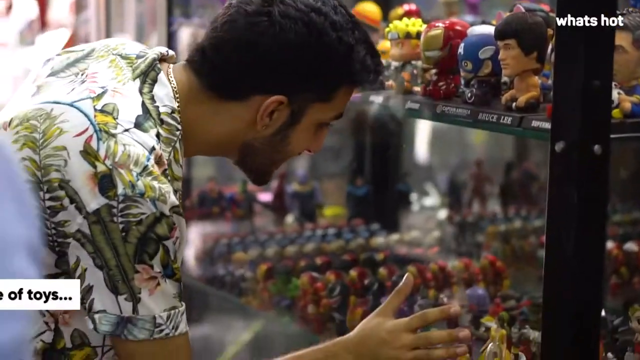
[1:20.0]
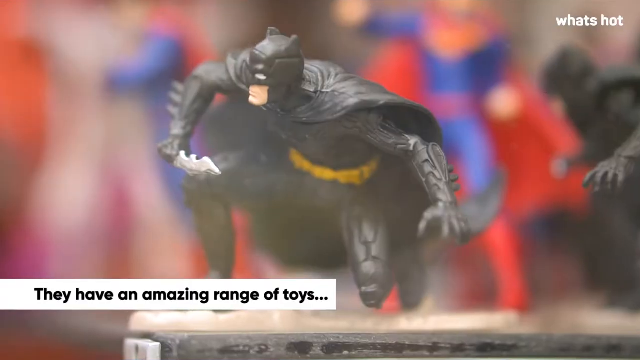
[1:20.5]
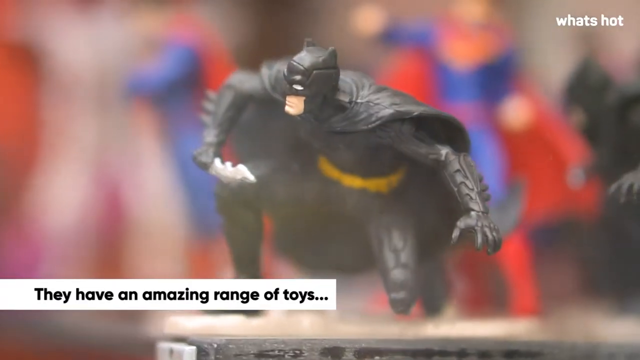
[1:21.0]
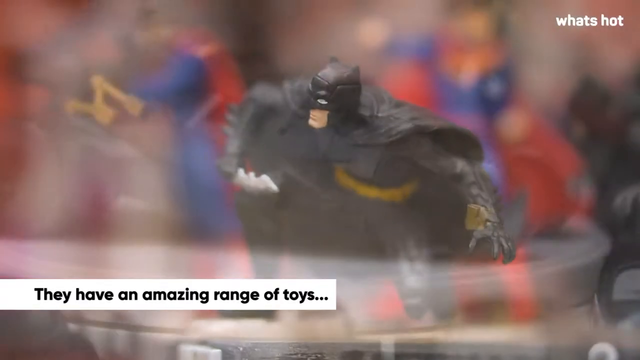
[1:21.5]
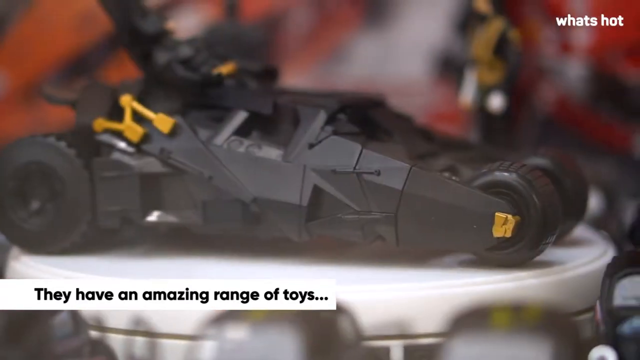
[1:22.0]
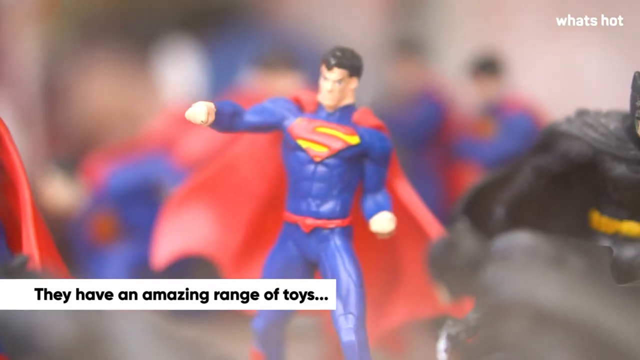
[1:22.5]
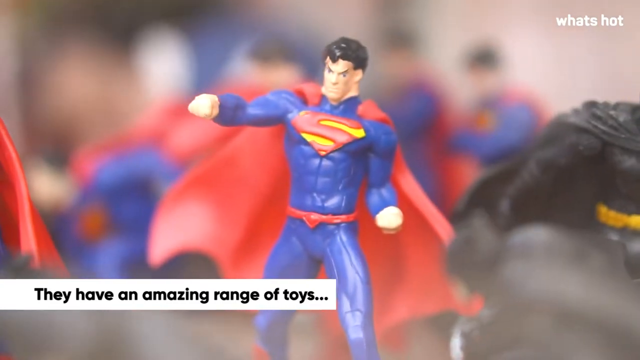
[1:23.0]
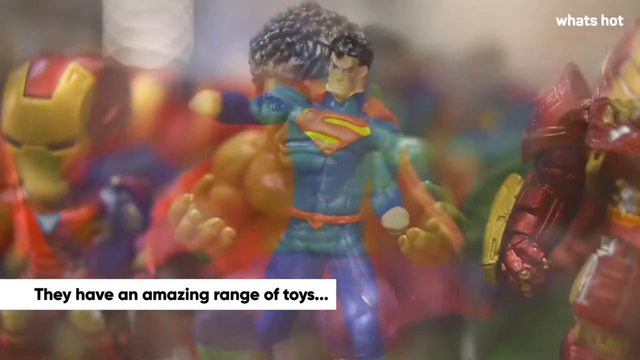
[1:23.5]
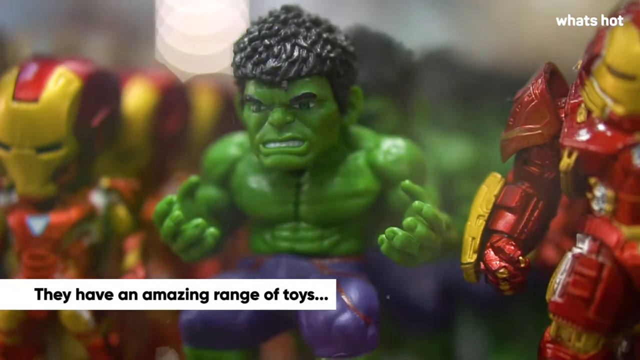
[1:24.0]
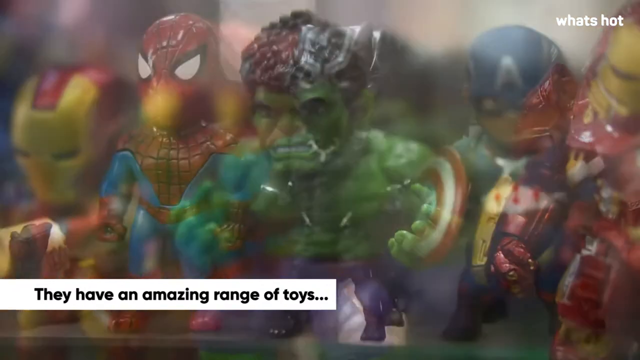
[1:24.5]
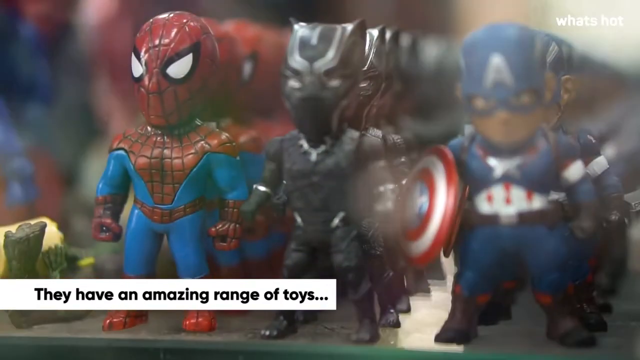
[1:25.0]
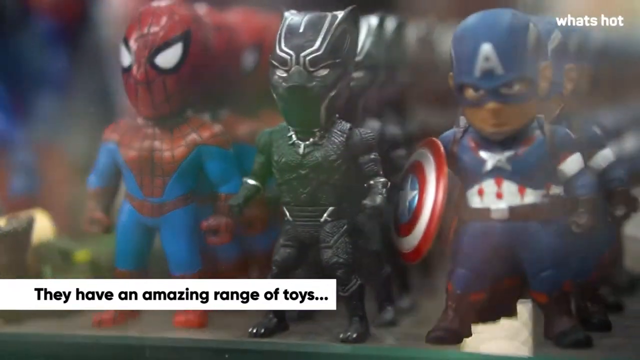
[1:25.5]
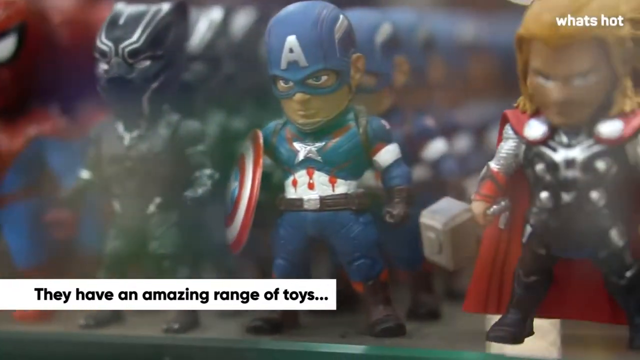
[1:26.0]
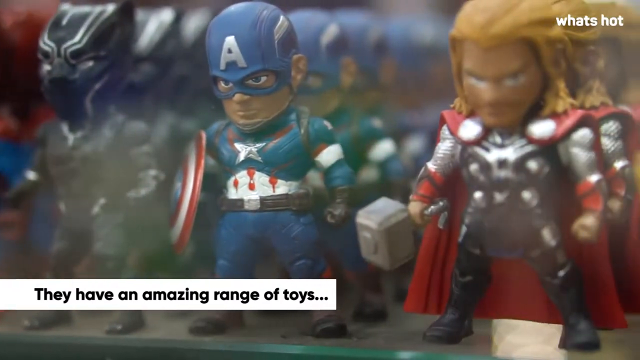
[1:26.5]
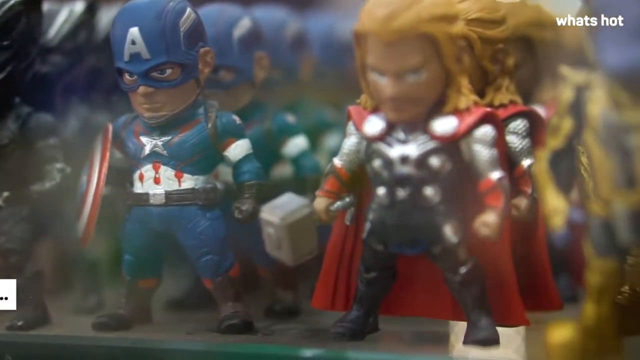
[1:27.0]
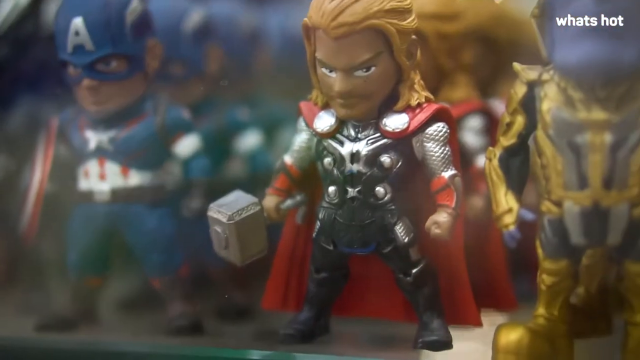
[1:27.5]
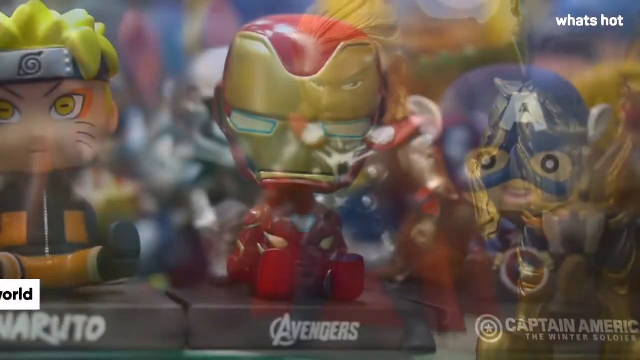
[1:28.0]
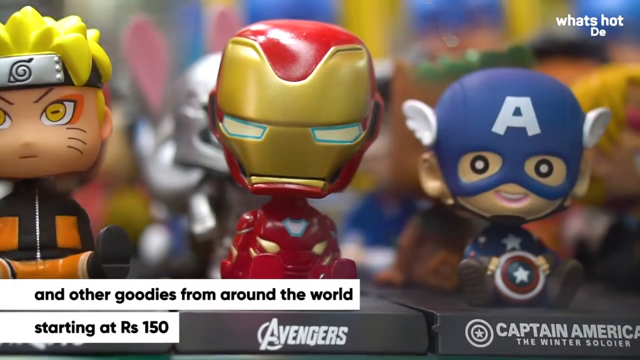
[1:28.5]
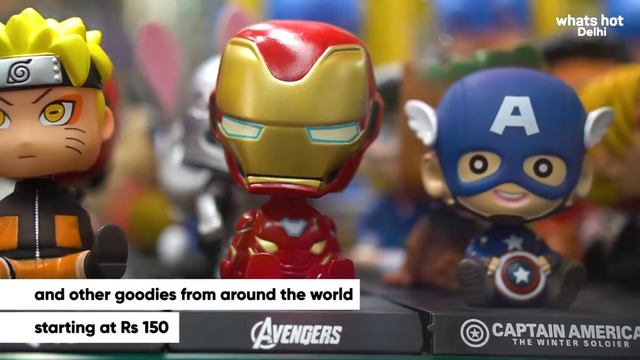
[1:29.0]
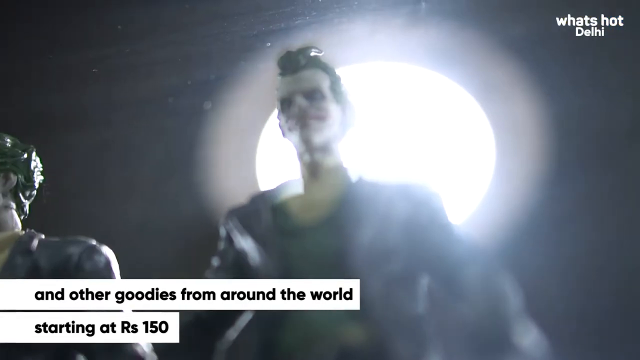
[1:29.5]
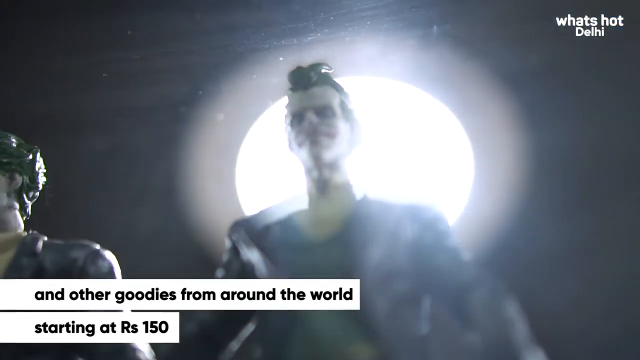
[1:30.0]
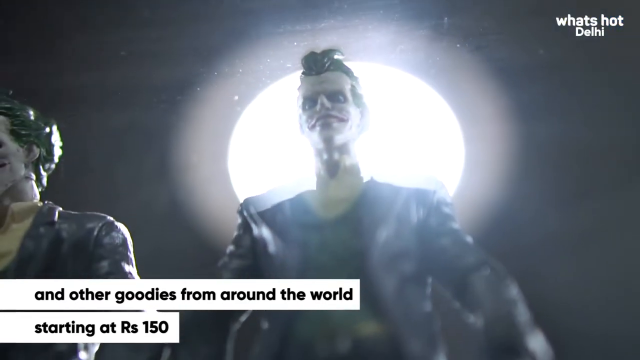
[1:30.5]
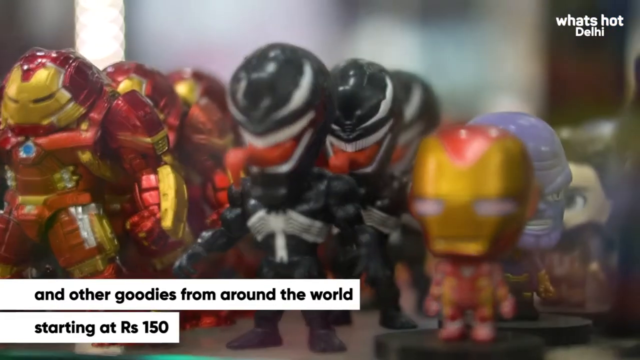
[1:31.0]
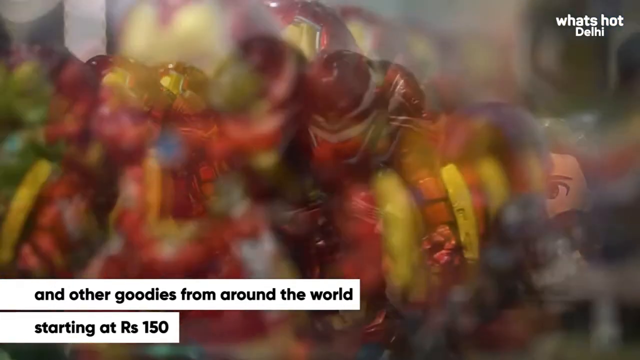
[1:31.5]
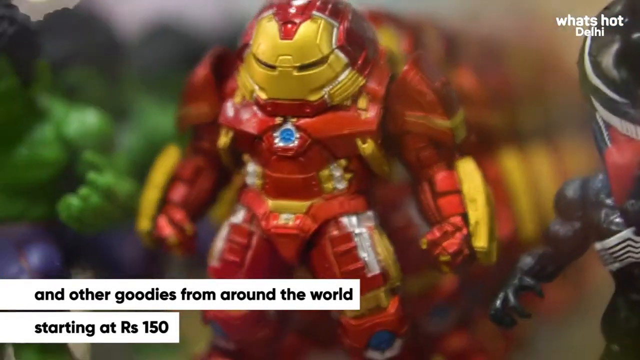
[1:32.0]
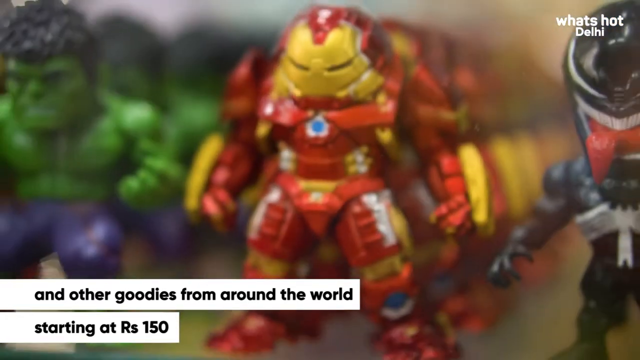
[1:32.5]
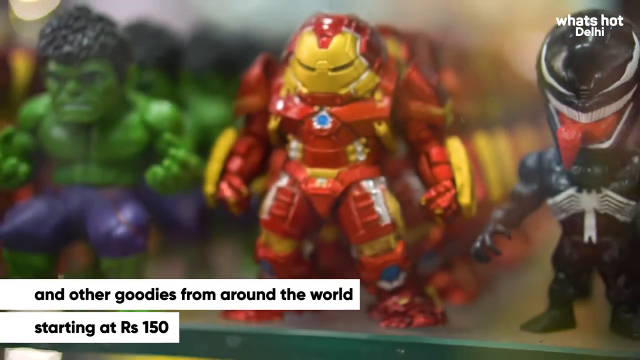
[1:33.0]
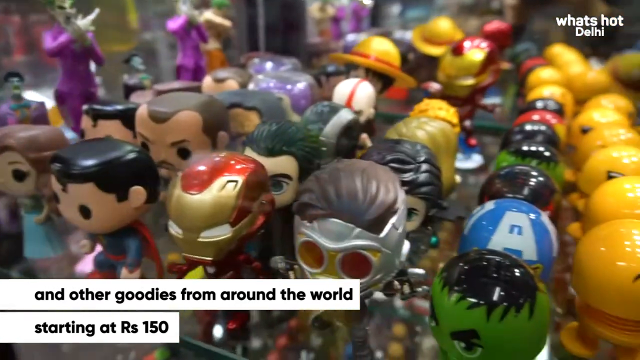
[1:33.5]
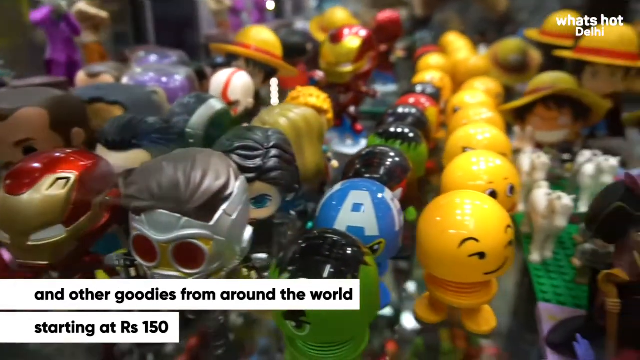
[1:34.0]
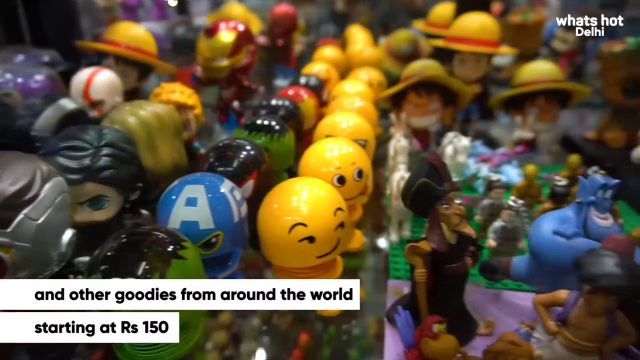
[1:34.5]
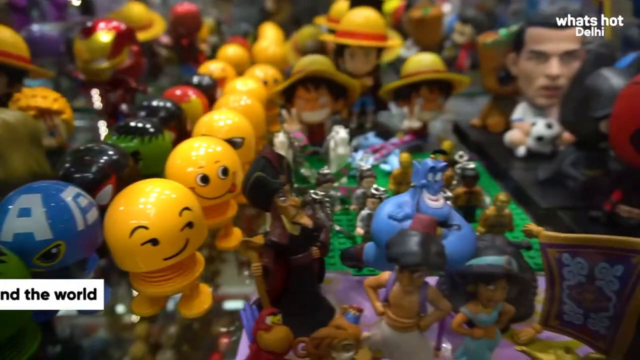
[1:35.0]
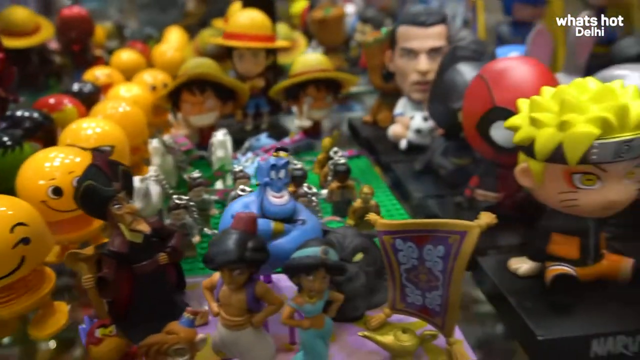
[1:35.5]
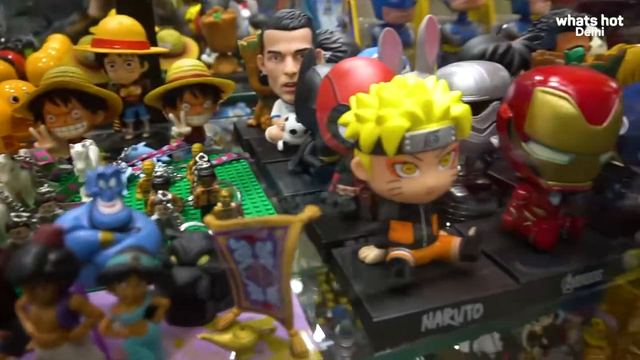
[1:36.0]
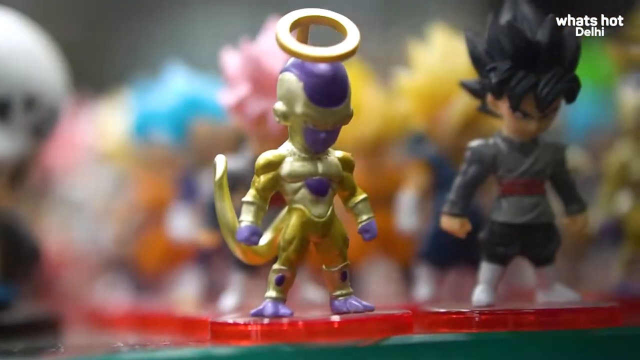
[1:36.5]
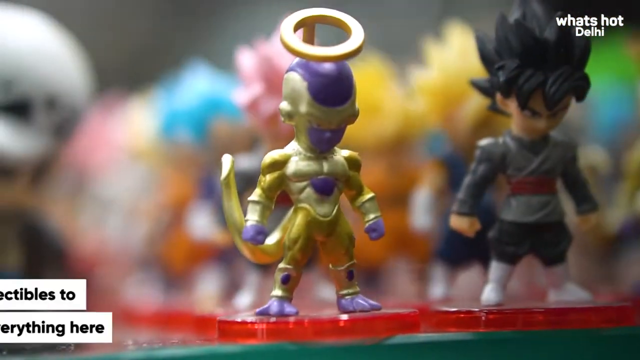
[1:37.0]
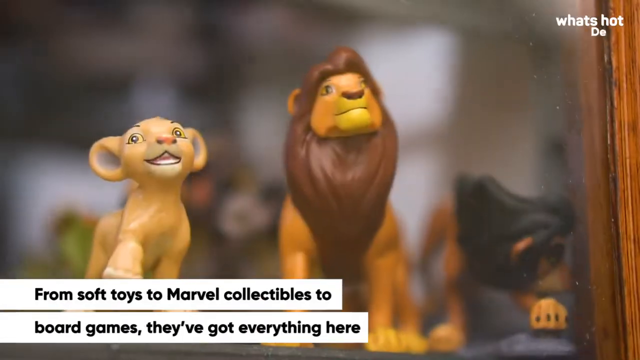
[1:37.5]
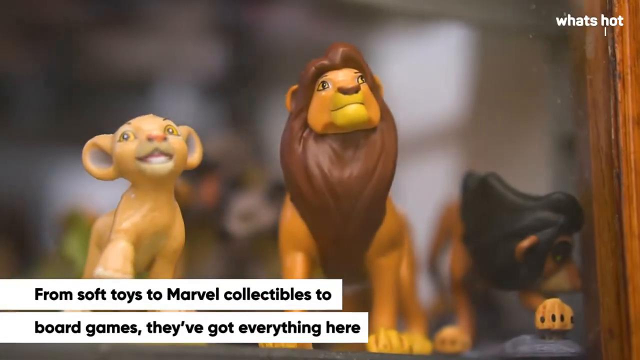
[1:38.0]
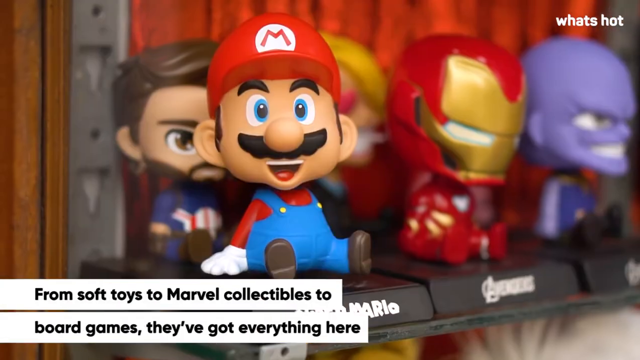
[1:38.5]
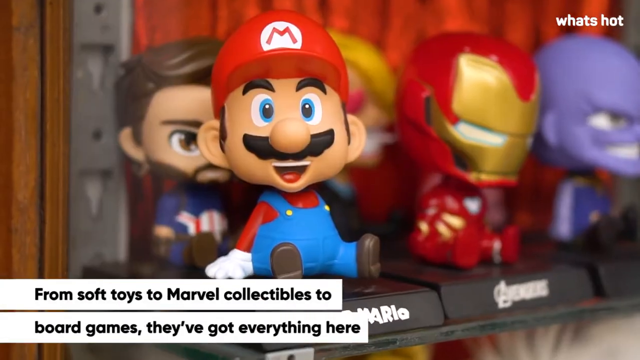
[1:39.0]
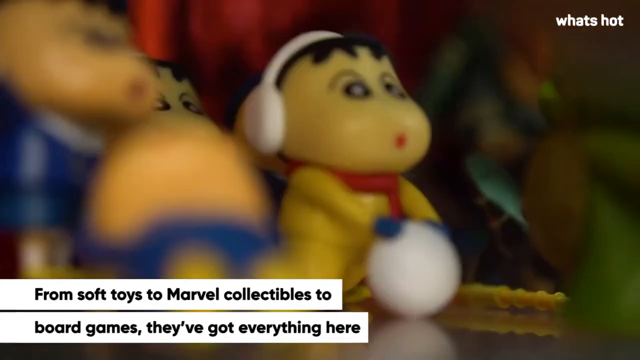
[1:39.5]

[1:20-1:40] The man looks through glass at Batman and Superman toys, with the Hulk also there. Text at the bottom left says "they have an amazing range of toys". Text at the bottom reads "and other goodies from around the world starting at rs 150", and "what's hot" appears at the top. Text at the bottom also reads "from soft toys to marble collectible board games".